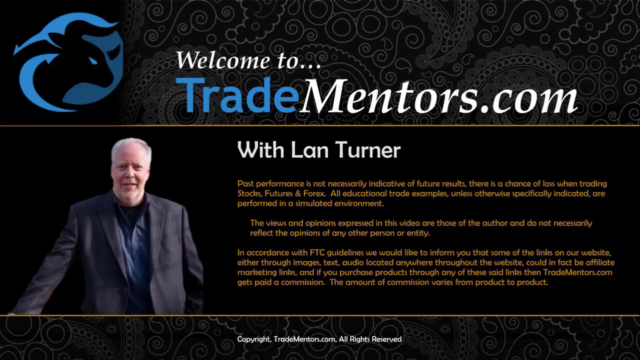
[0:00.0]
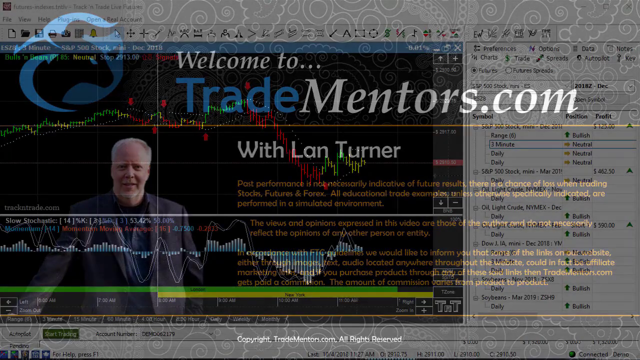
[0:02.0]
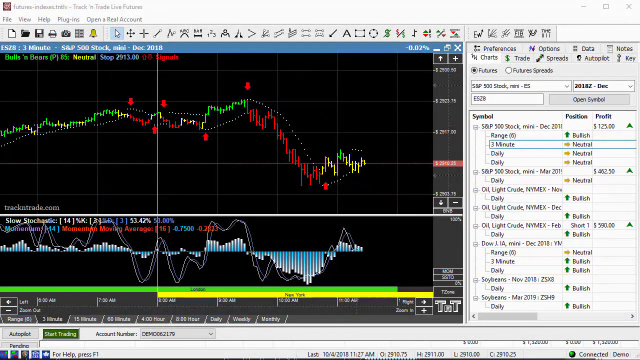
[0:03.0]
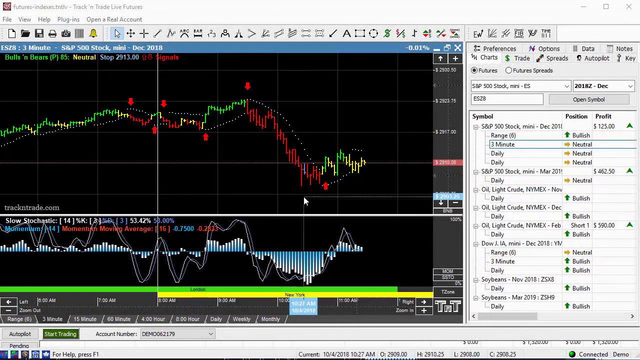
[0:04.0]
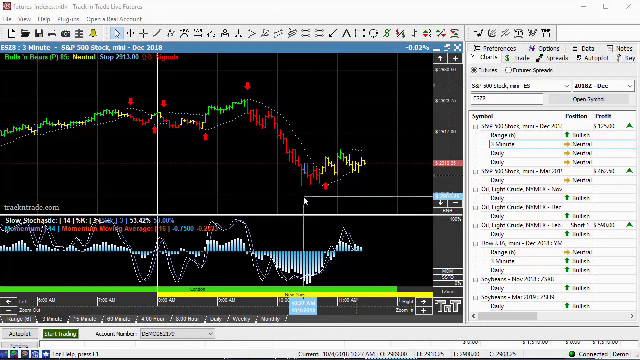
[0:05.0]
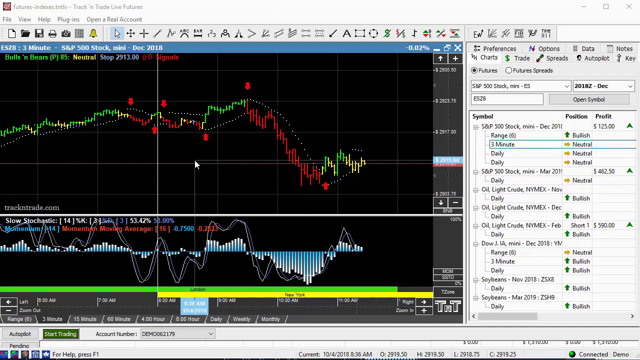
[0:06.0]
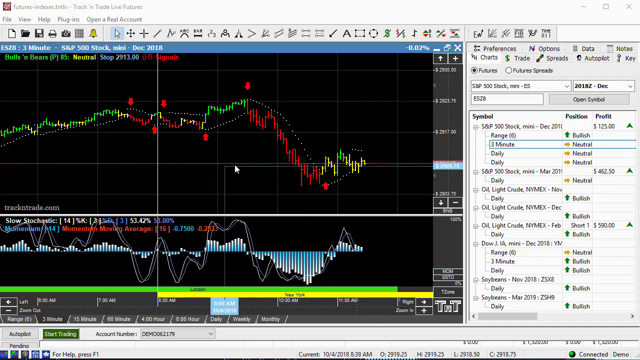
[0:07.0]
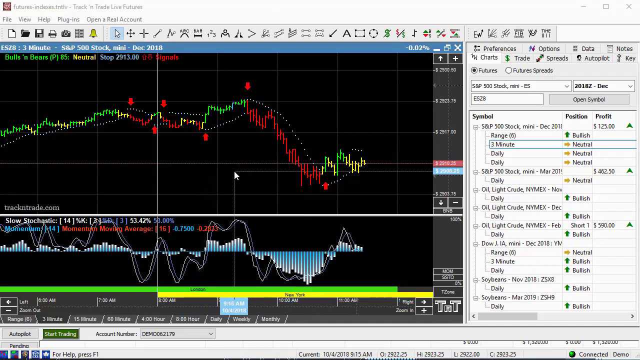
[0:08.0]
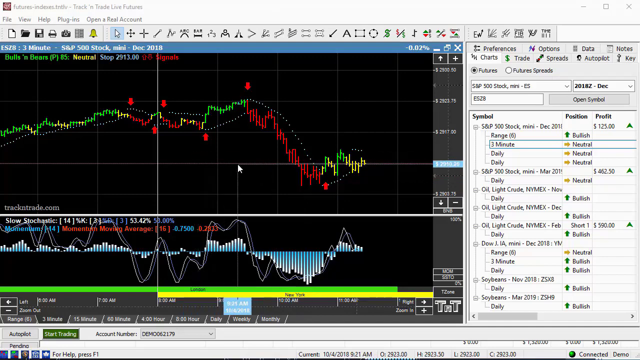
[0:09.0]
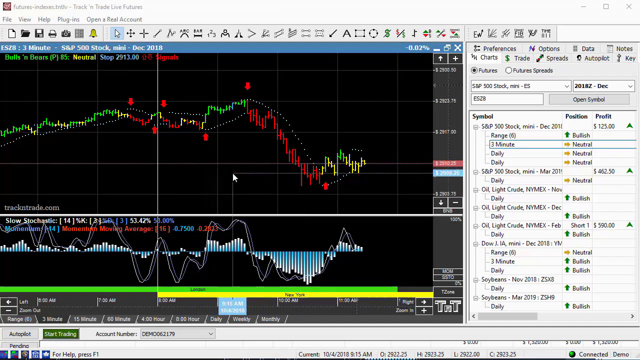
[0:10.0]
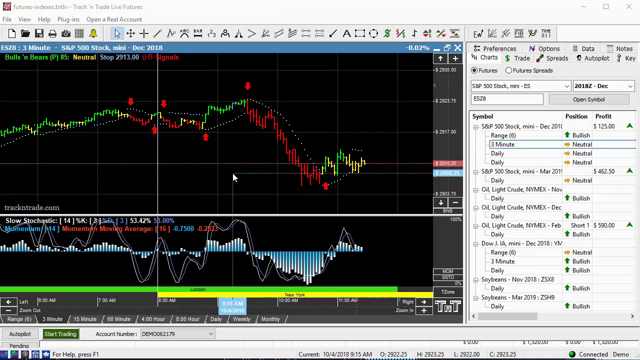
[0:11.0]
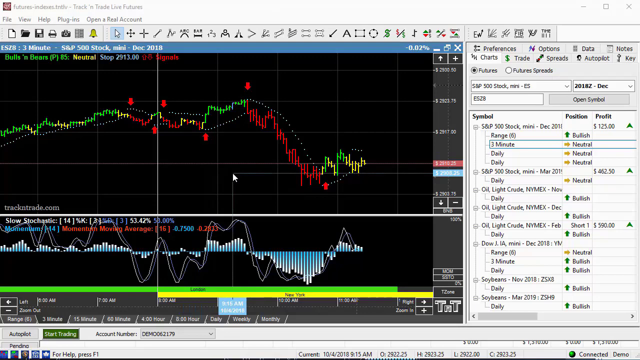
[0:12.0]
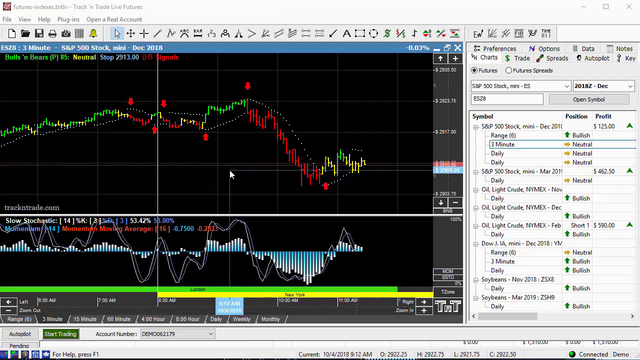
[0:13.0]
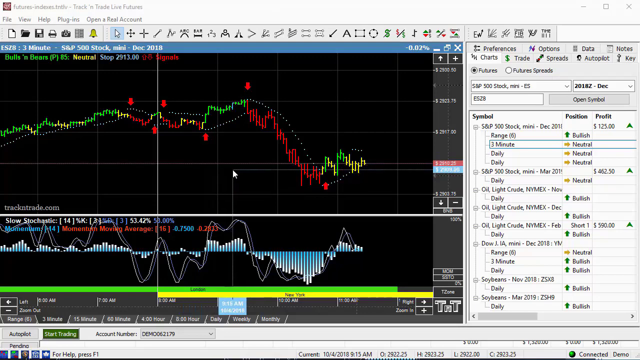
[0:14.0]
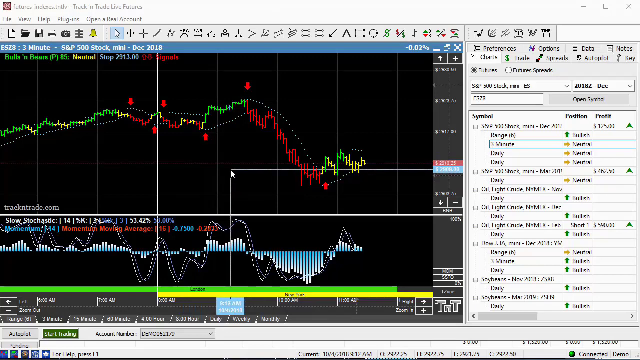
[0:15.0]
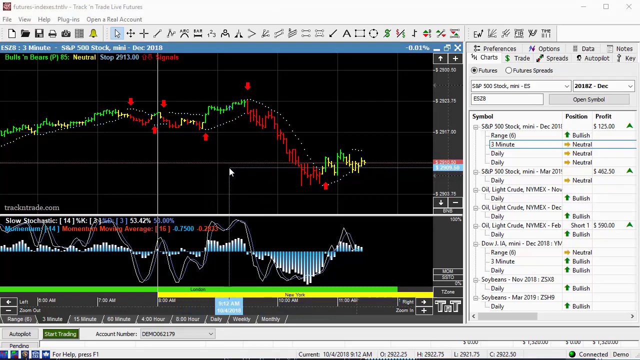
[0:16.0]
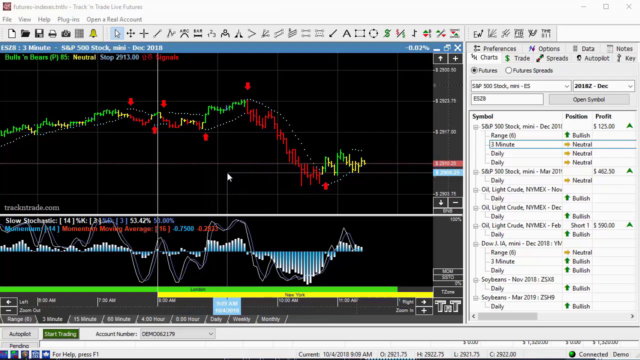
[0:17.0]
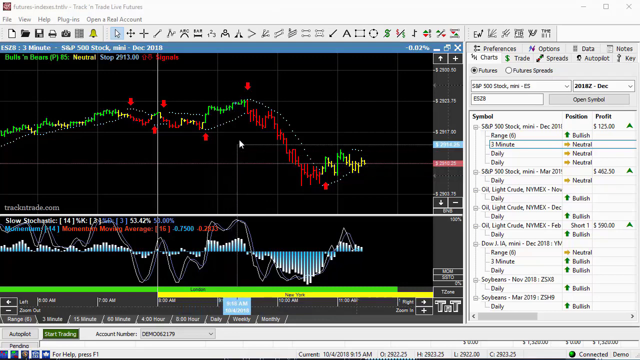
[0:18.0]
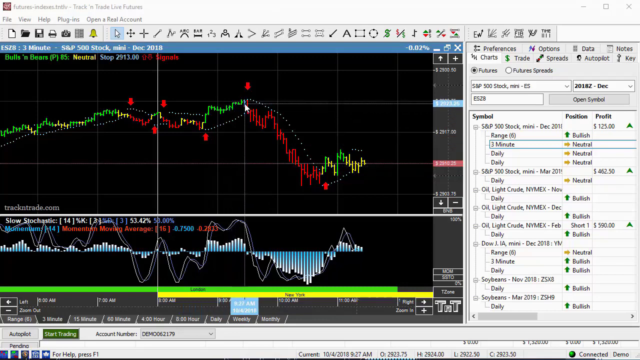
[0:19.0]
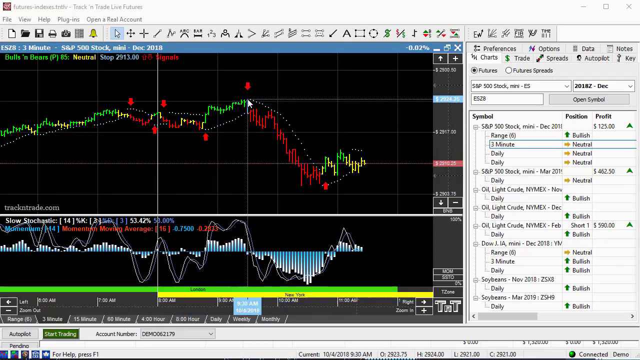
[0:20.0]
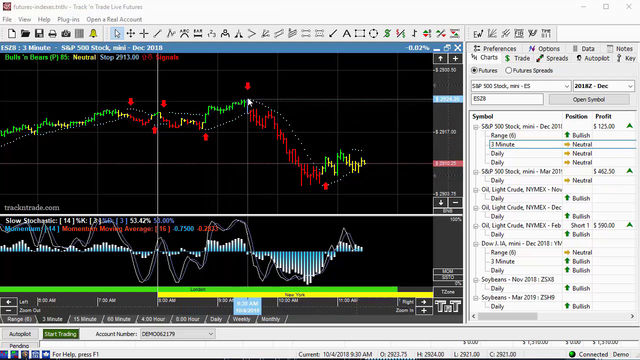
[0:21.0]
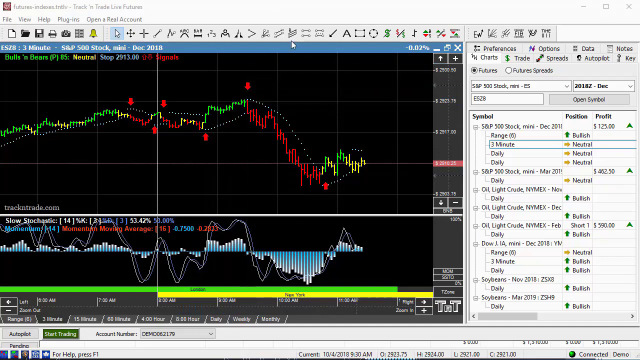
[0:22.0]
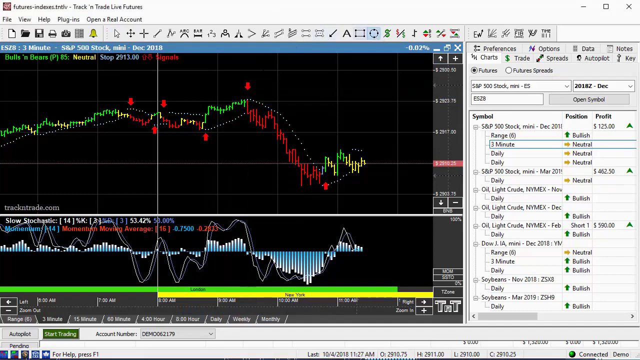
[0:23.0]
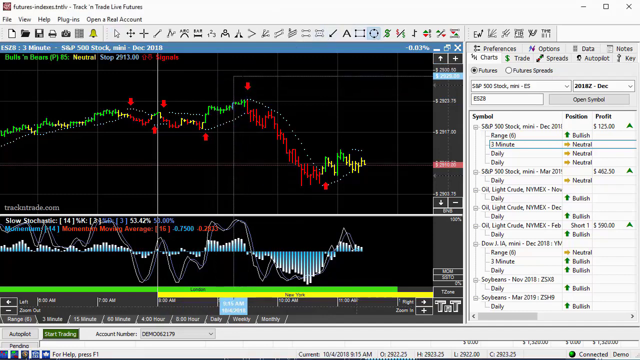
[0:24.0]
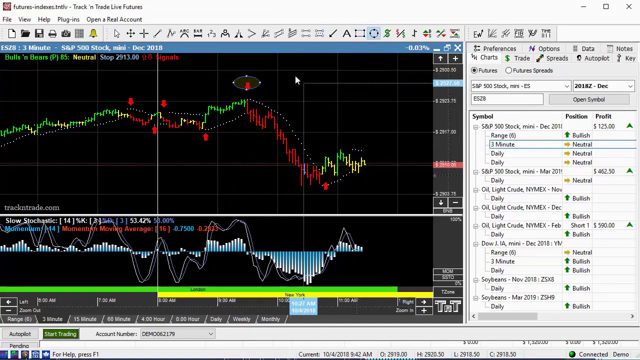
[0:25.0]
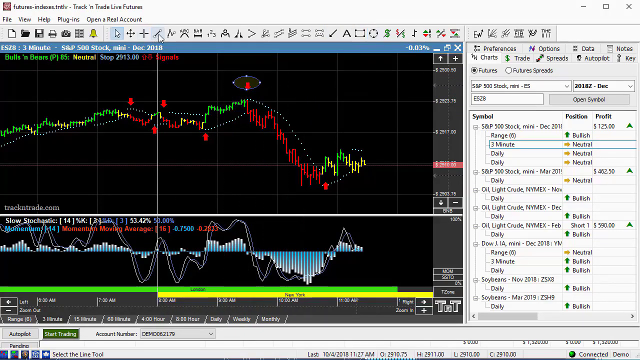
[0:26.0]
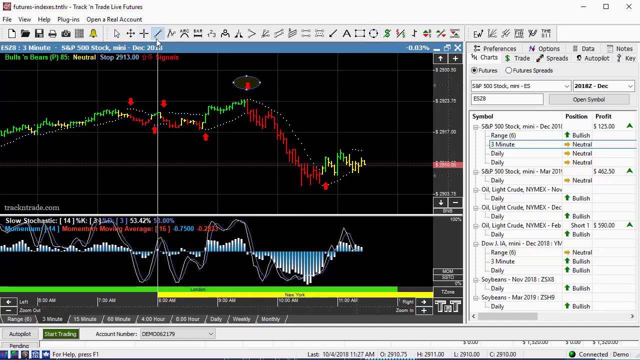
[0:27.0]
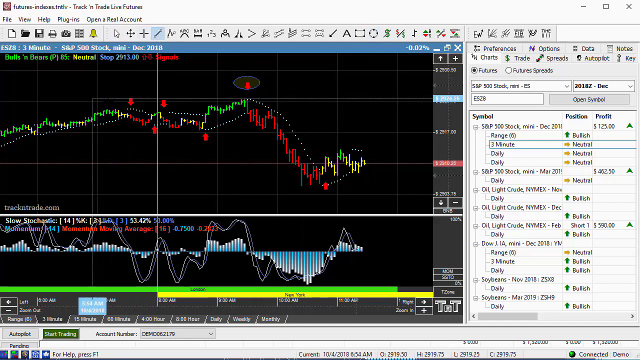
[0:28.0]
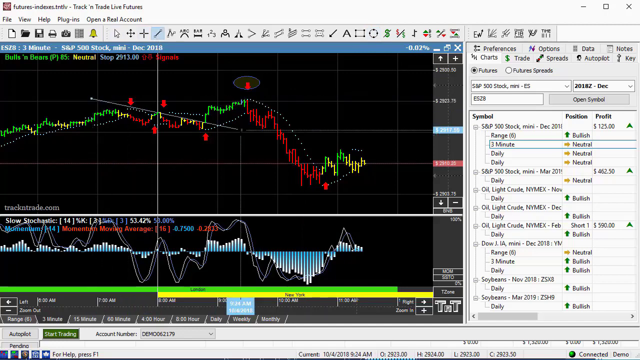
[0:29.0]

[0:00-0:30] The video opens on the words "welcome to tradementors.com", with the word "trade" in blue font at the very top. Toward the left side is an image of a blue logo, and below it an image of an older man looking directly at the camera. He wears a gray suit with a dark blue shirt underneath and has white hair and a white beard. To his right are the words "with Lan Turner" in white font. Below that, more text reads "past performance is not necessarily indicative of future results. There is a chance of loss when trading stocks, futures, and forex. All educational trade examples, unless otherwise specifically indicated, are performed in a simulated environment." More words follow below. The scene then changes to a graphical representation of what looks to be a data set, with a cursor pointing at different areas and moving vertically and horizontally on the graph.